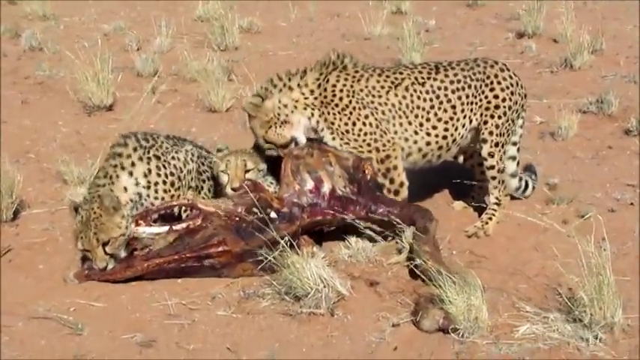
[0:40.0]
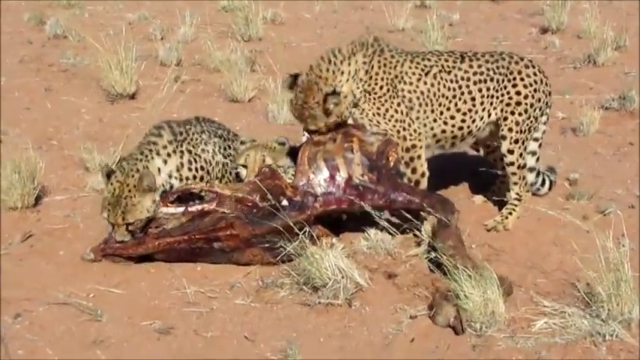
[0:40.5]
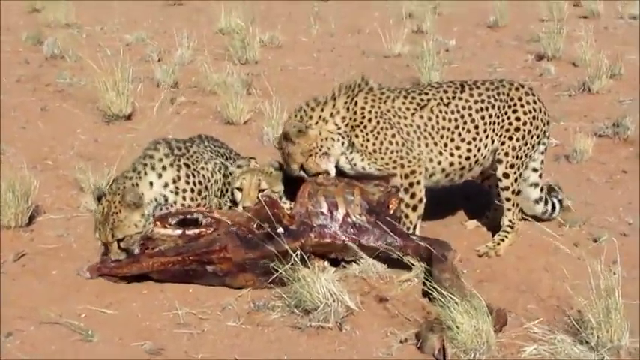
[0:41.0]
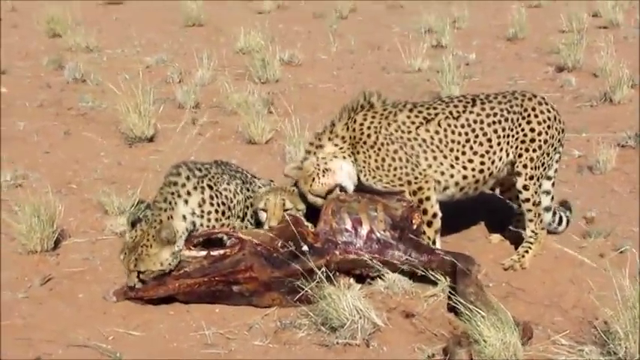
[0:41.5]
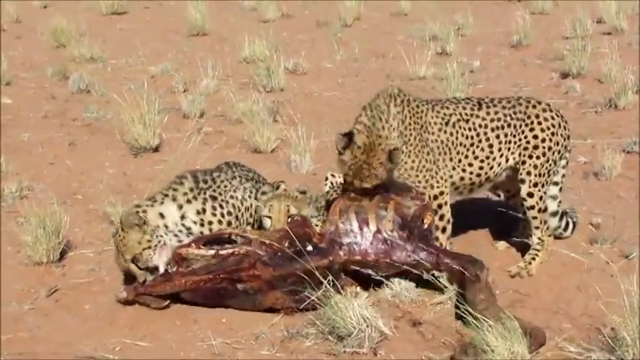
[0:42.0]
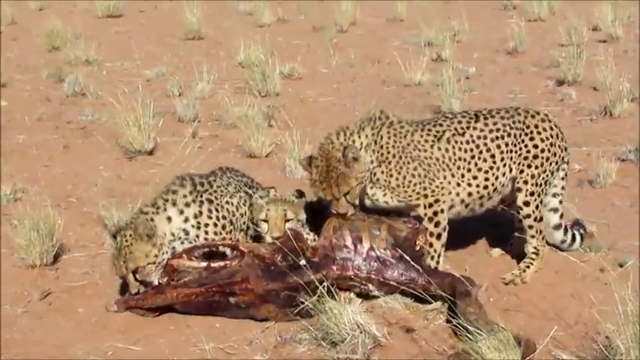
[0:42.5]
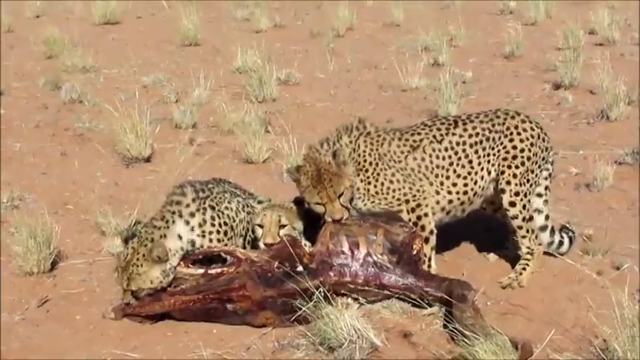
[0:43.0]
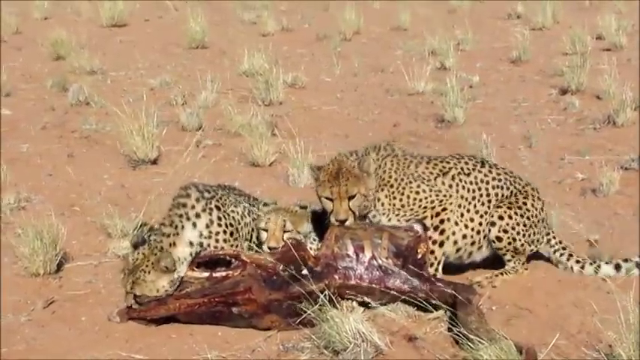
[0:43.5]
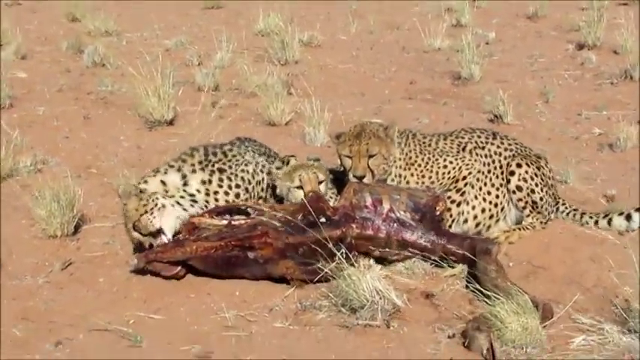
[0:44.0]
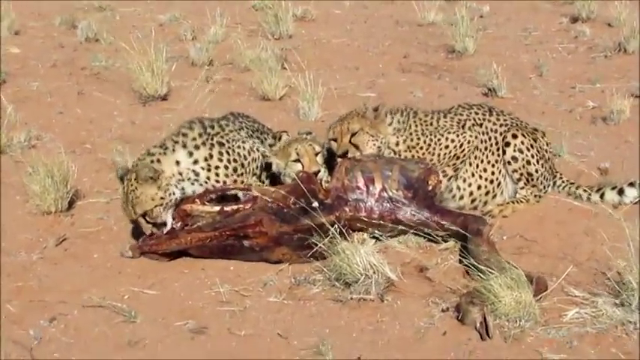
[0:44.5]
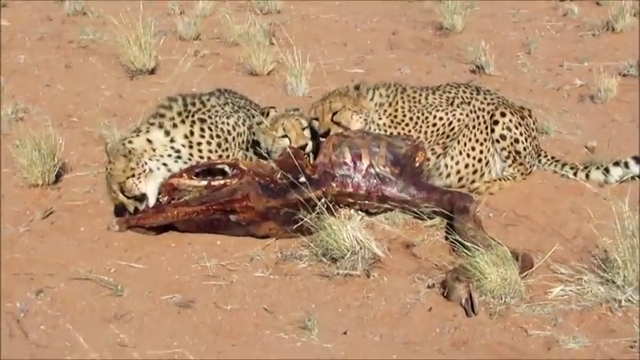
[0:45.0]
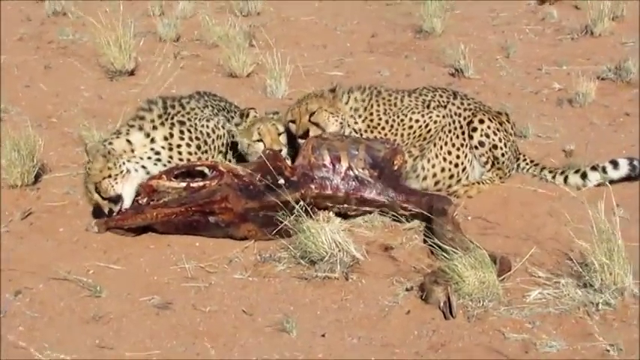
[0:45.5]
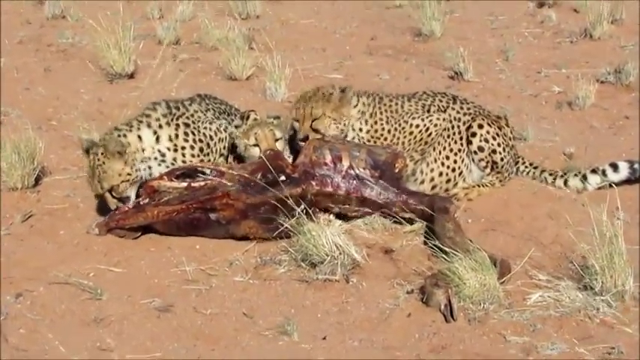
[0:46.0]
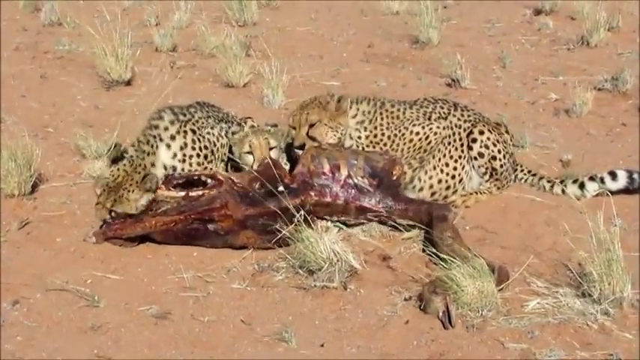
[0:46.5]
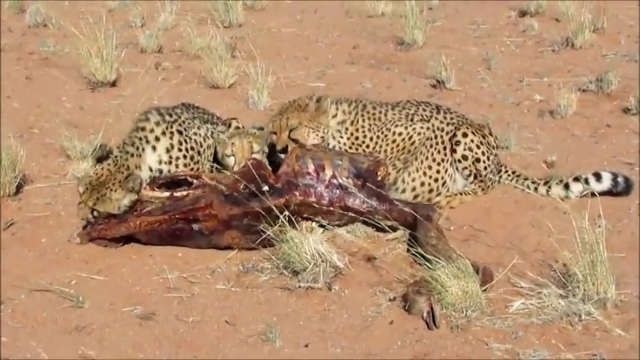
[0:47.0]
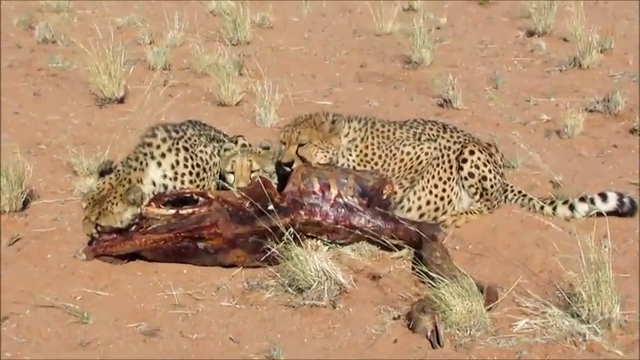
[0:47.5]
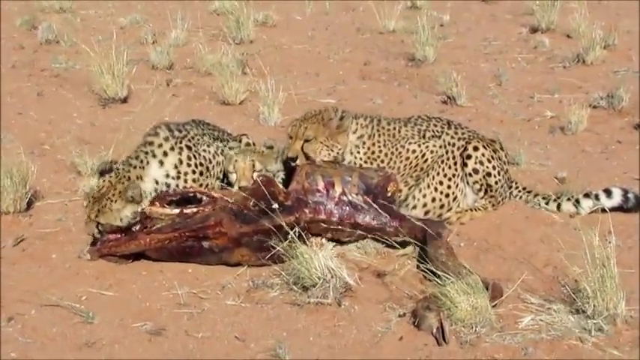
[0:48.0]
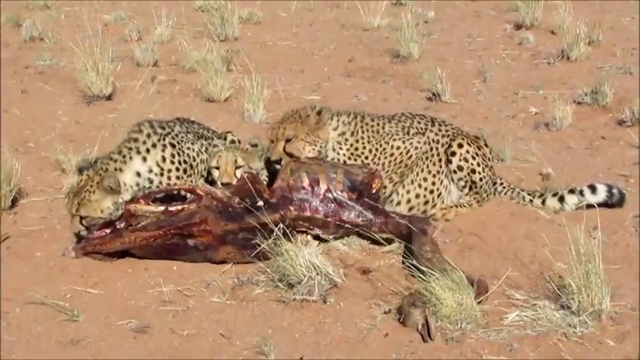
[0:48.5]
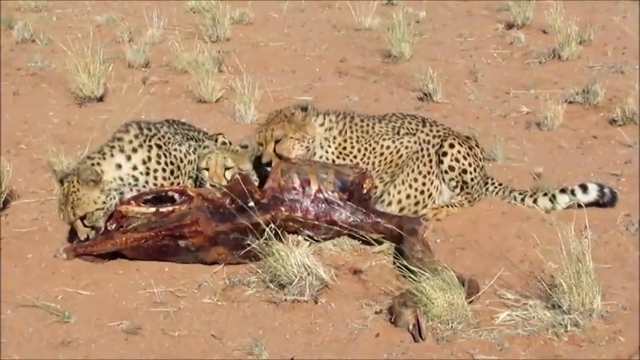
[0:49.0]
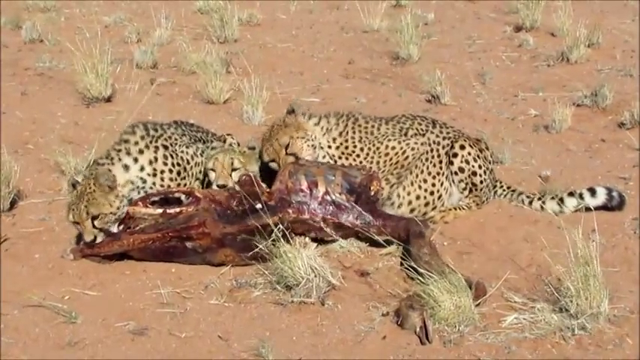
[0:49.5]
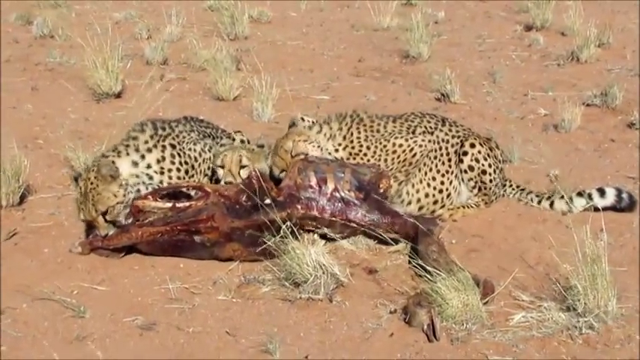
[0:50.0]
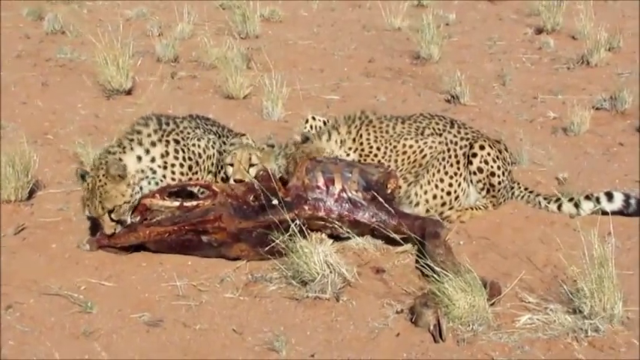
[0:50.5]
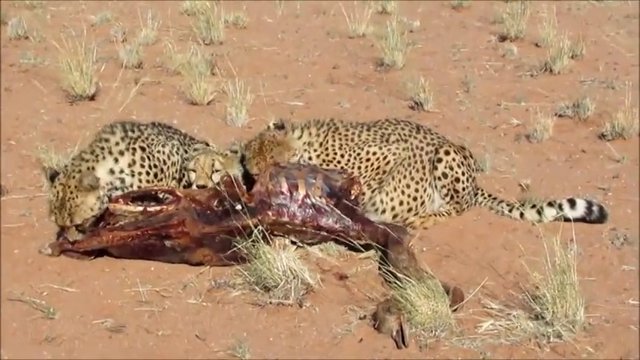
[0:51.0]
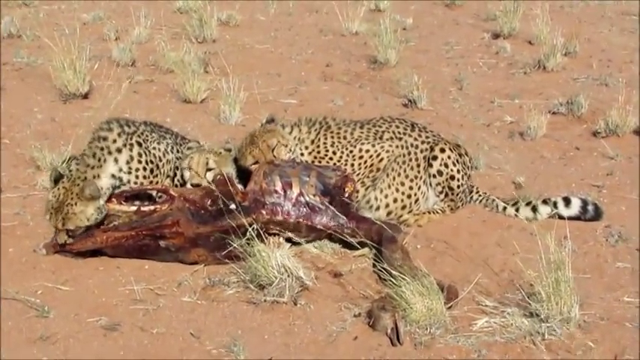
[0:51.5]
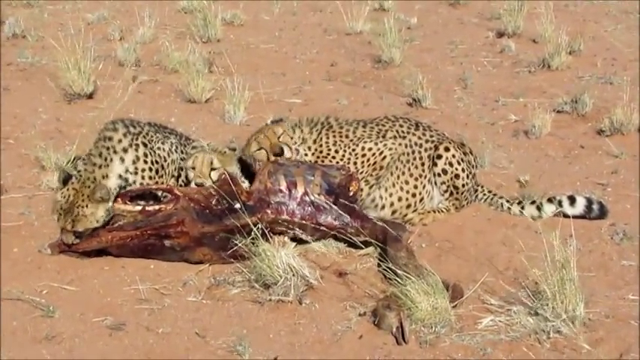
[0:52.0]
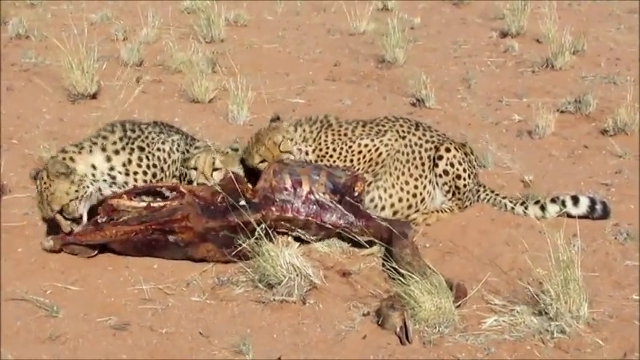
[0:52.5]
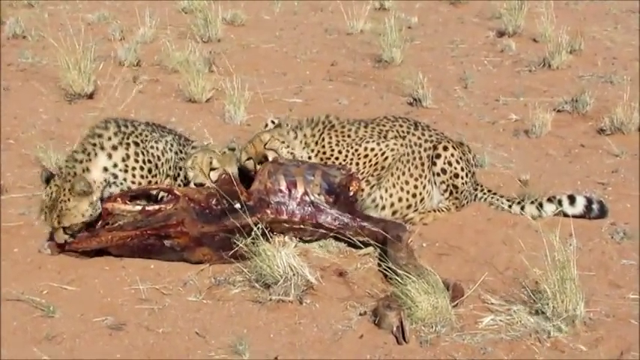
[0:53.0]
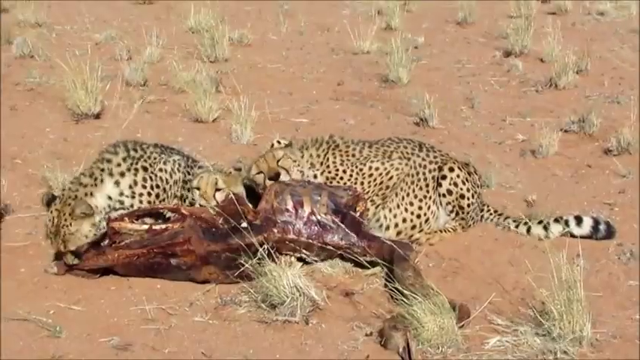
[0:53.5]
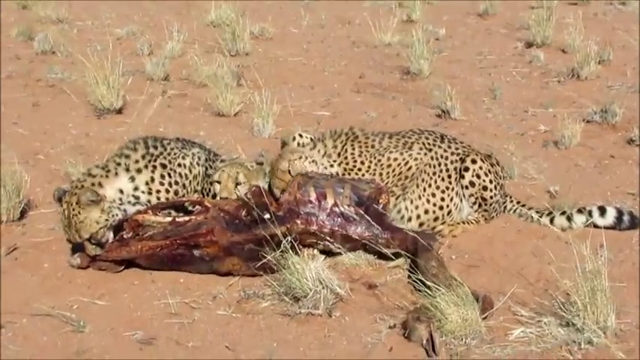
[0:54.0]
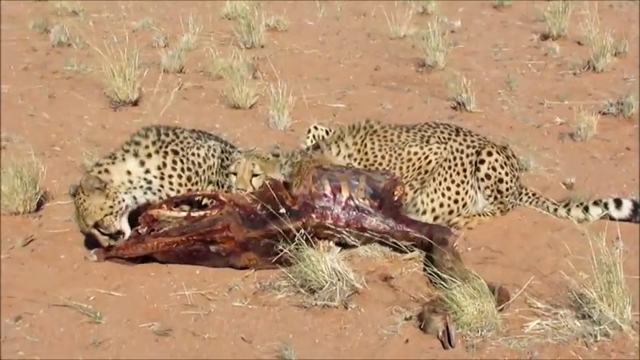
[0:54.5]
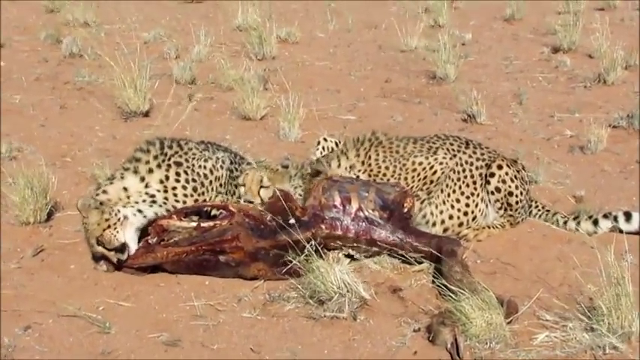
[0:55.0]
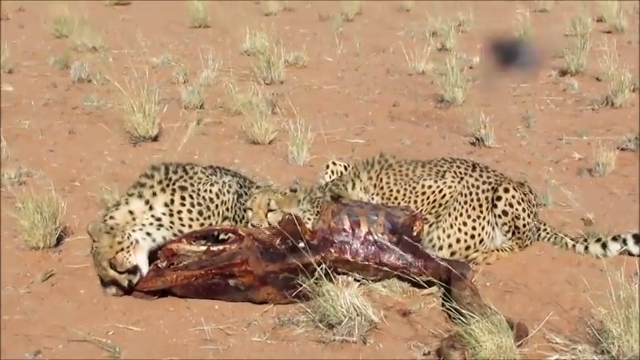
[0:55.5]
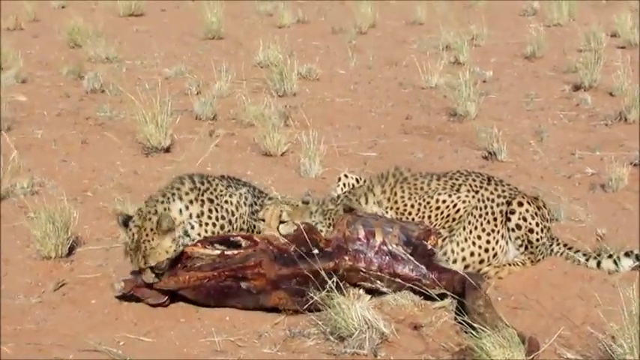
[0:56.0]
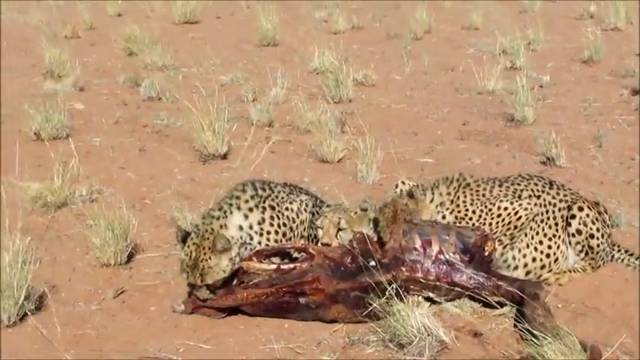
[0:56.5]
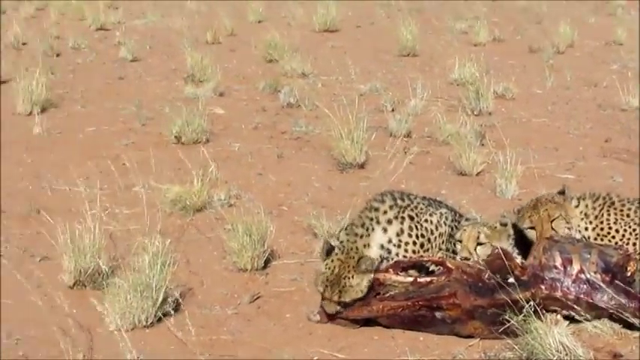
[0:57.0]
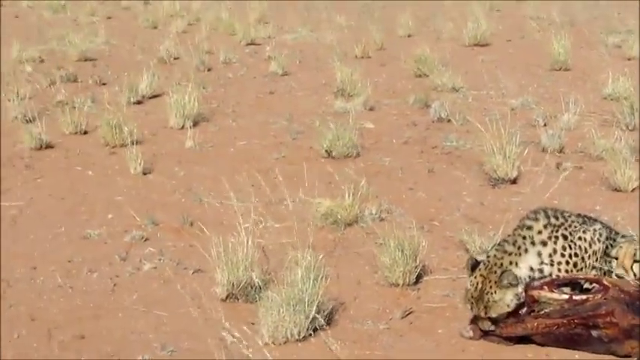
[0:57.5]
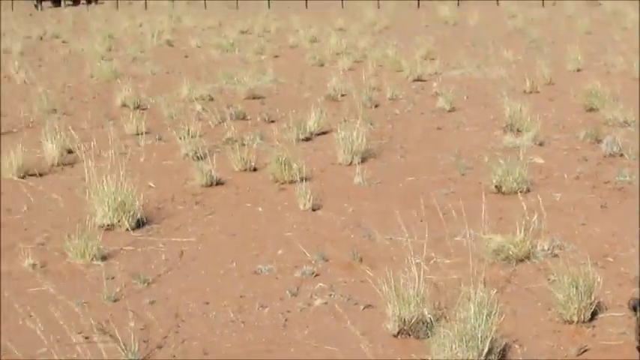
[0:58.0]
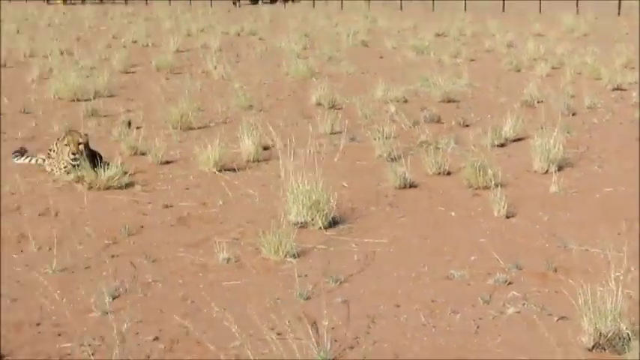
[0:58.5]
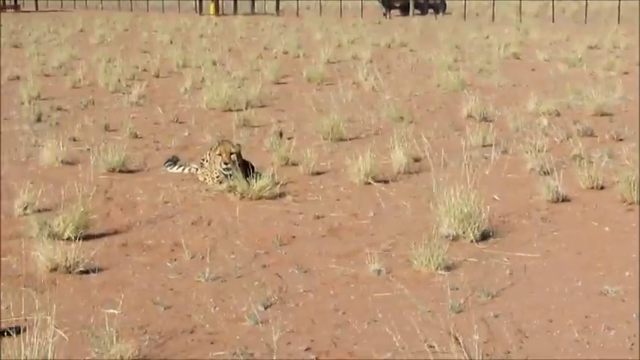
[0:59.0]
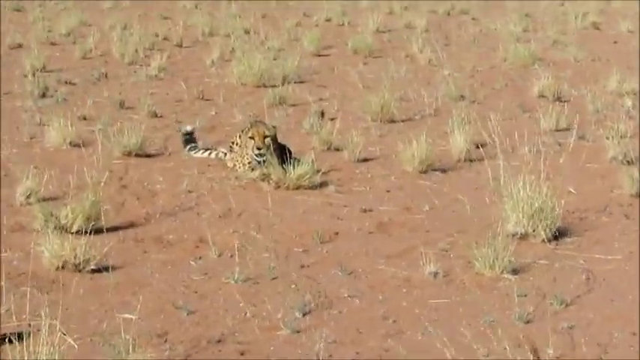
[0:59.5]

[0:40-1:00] Three cheetahs in the middle of the frame eat the carcass of an animal, probably not killed that recently since the animal is not very identifiable; the cheetahs may be scavenging the remains of an animal killed previously. It is a little hard to tell, but the animal has definitely been very well consumed already. The cheetah on the right gets a little violent, trying to pull flesh off before finally sitting down, so all three cheetahs are now sitting. The one on the right shakes its head from right to left to tear off a bit of flesh, while the one on the left sits calmly munching. The cheetahs are fairly relaxed and do not seem to be looking out for danger. The camera pans to the left to show another cheetah sitting there watching, possibly standing guard and watching for danger on their behalf.